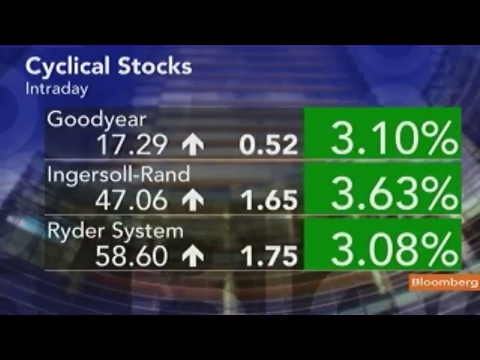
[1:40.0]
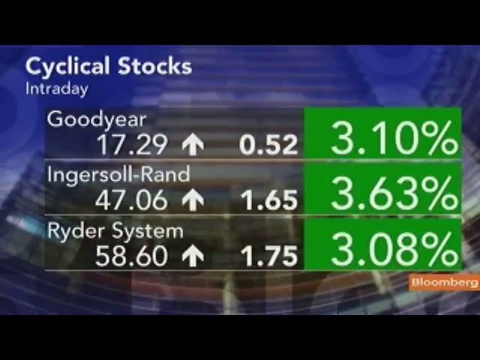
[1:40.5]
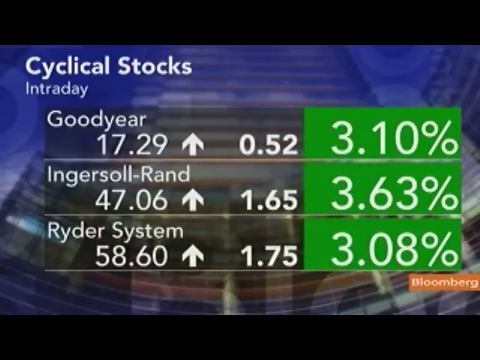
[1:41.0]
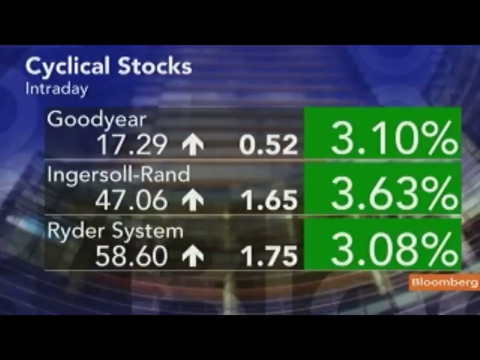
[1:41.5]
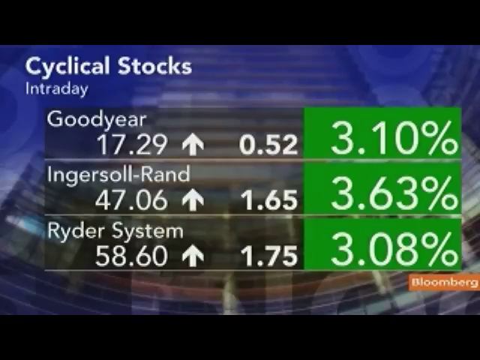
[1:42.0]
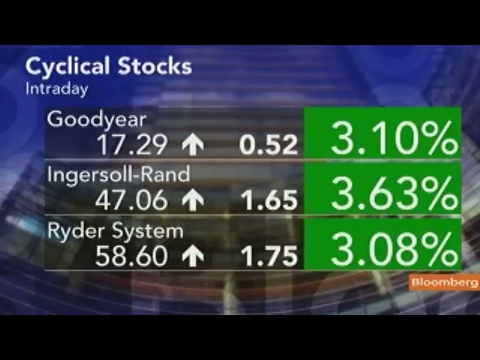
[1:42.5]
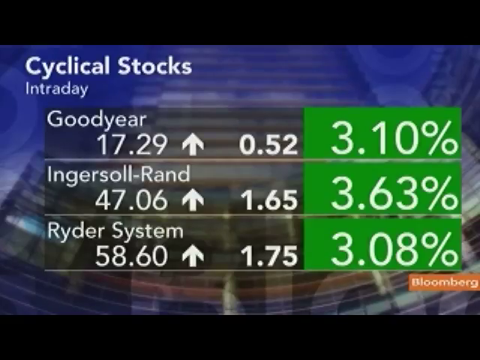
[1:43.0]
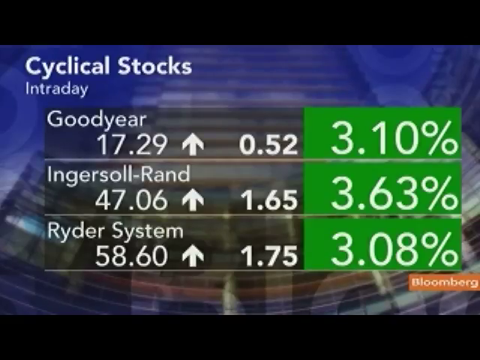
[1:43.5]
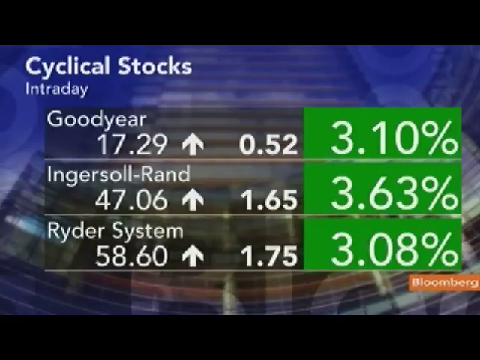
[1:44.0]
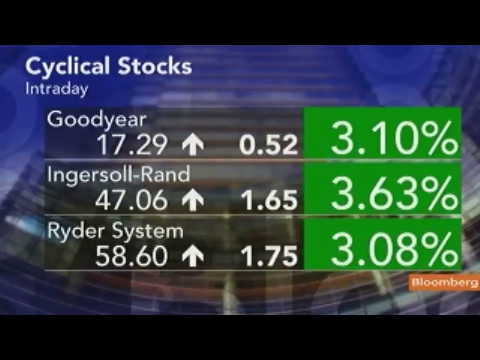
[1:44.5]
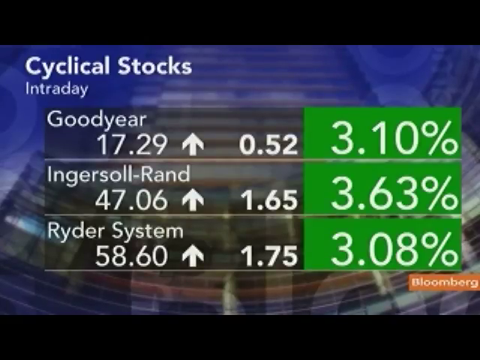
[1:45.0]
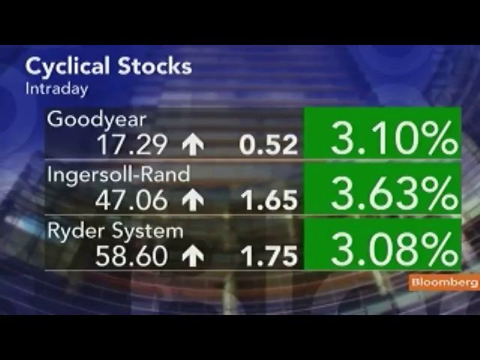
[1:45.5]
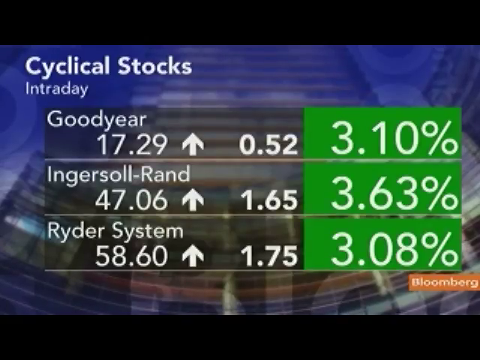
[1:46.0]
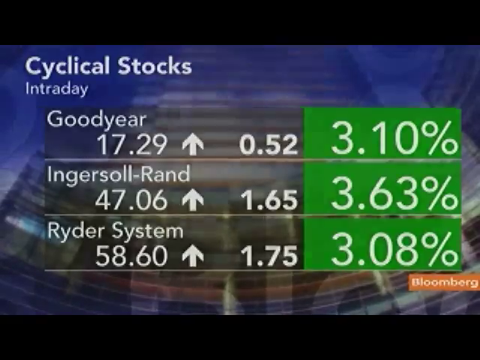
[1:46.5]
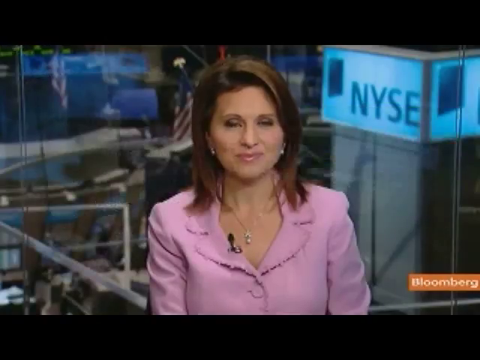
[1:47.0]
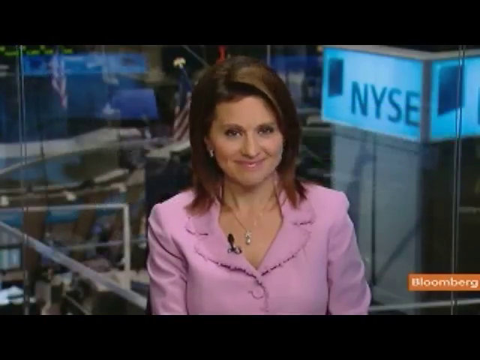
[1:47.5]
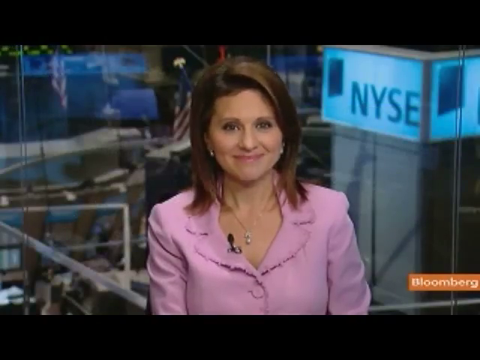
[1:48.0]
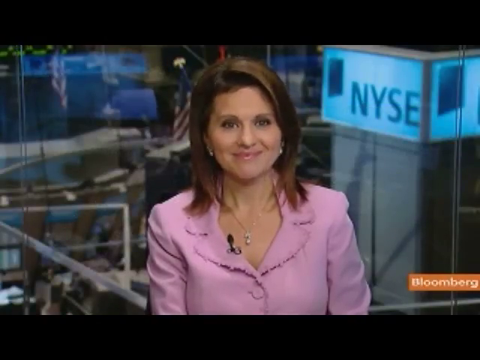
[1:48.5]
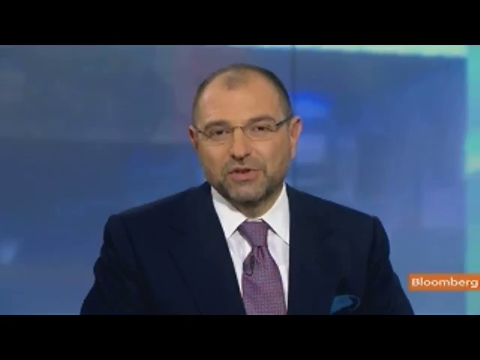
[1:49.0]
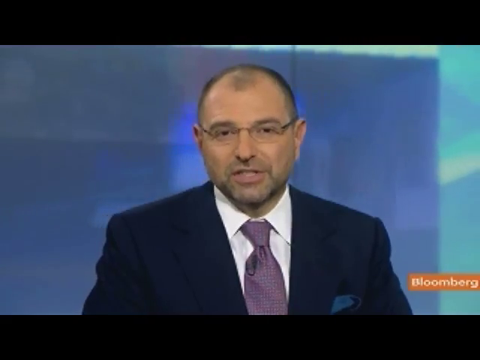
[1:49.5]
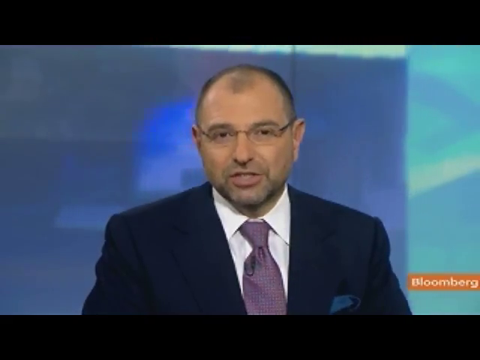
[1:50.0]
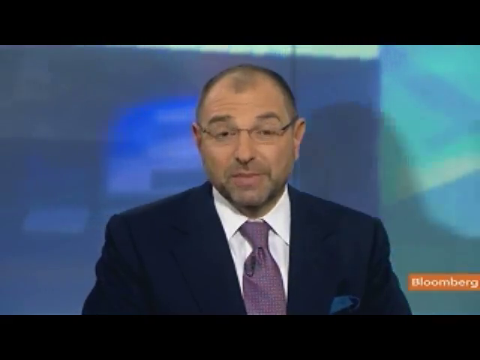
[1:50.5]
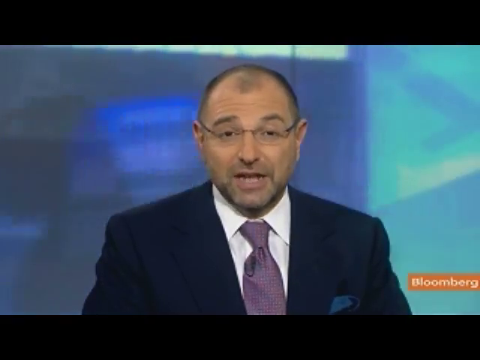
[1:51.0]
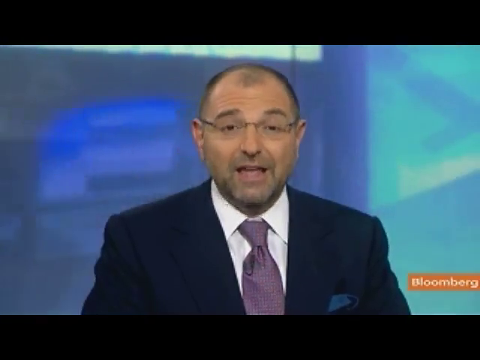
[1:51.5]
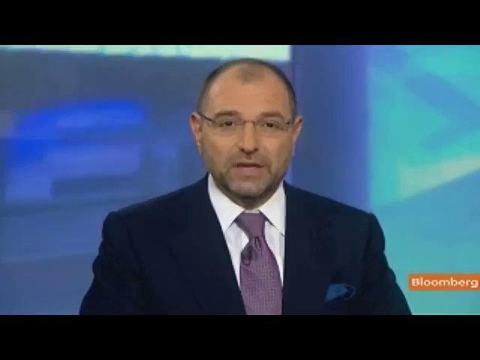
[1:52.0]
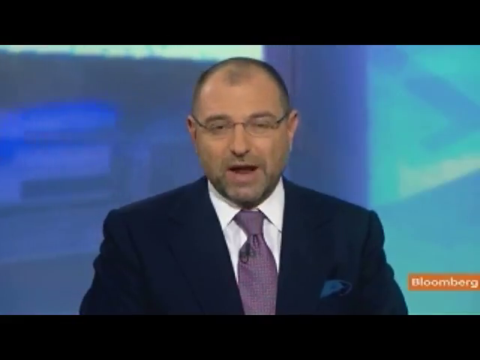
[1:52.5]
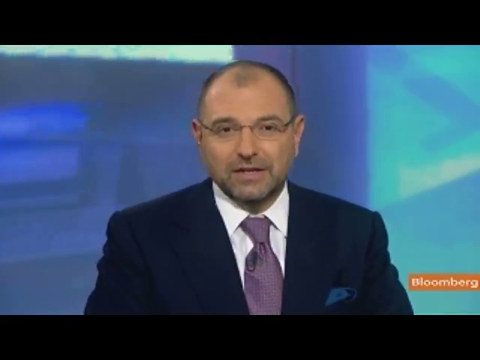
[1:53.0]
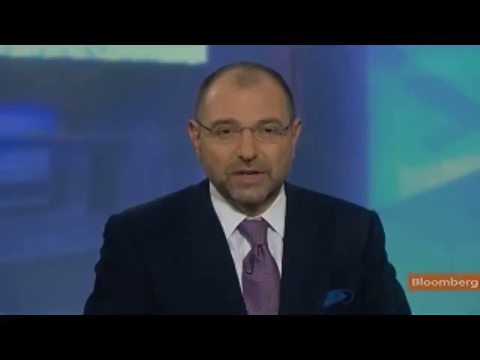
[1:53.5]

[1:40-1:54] The Bloomberg news broadcast shows the cyclical stocks graphic, with "intraday" below it. Three companies are highlighted, all in the green rather than the red and on the upward rise: Goodyear is up 3.10%, Ingersoll Rand is up 3.63%, and Ryder System is up 3.08%. Behind the graphic is a blurred image of buildings. The reporter in pink then appears again, wearing a pink outfit, with a microphone attached to her lapel, a necklace, earrings and brown hair; she is Caucasian and smiling, with the NYSE behind her. At the end, a male with a dark suit, glasses, very little hair and a purple tie talks to the camera as a reporter.